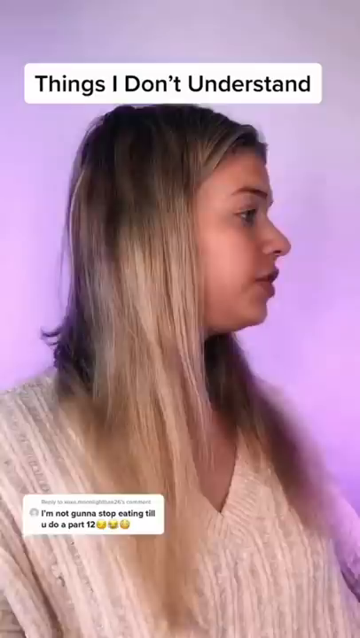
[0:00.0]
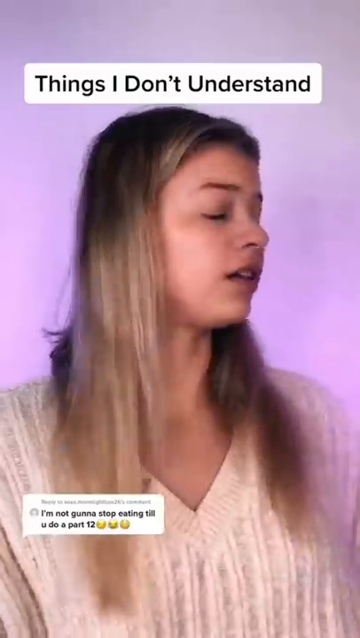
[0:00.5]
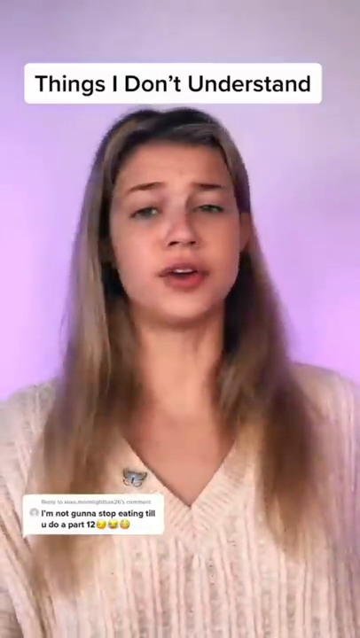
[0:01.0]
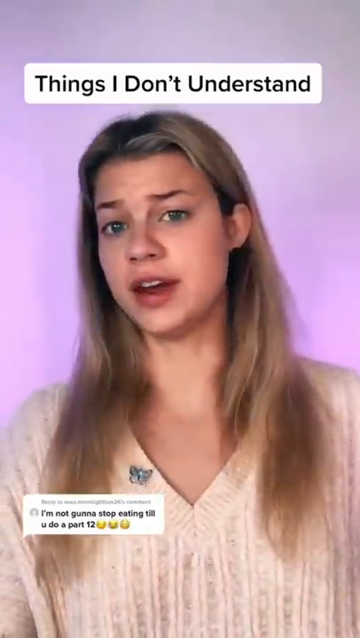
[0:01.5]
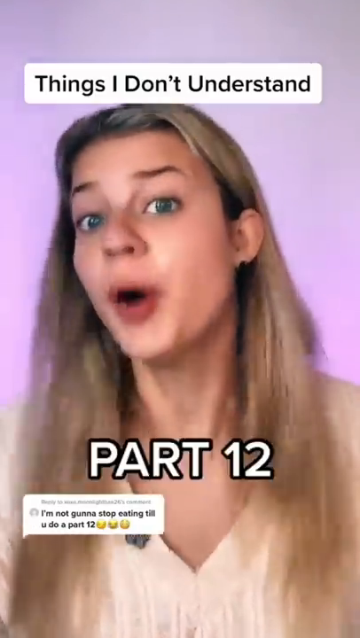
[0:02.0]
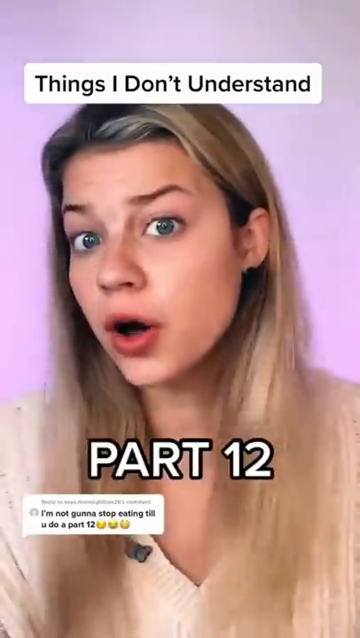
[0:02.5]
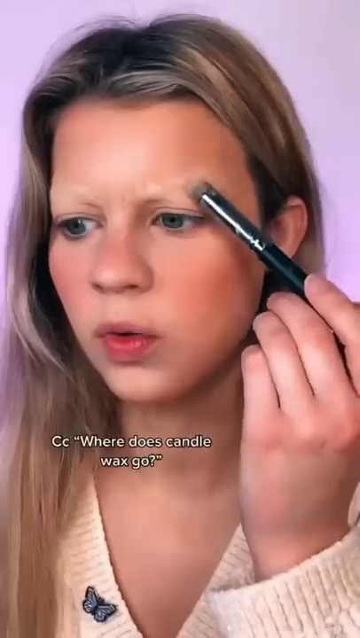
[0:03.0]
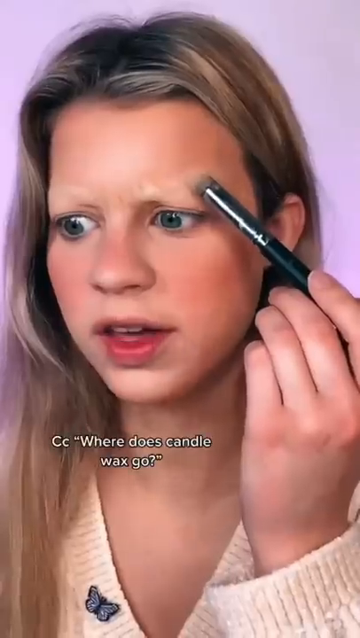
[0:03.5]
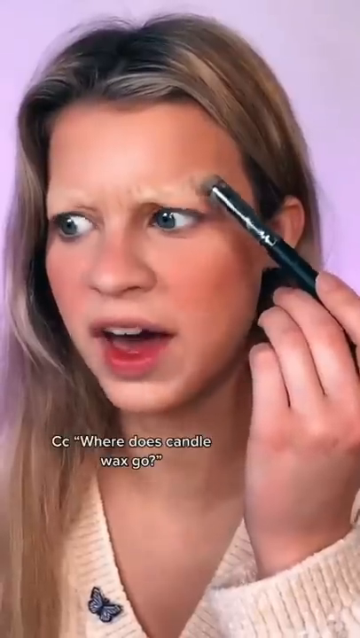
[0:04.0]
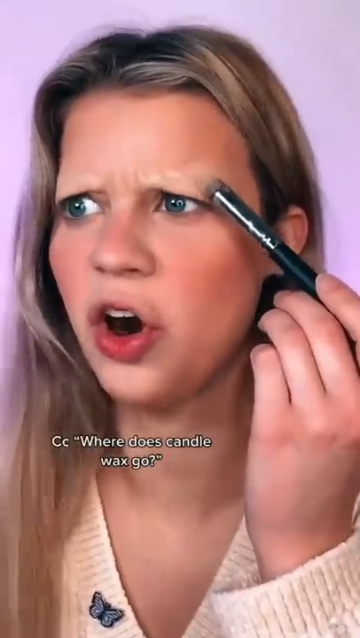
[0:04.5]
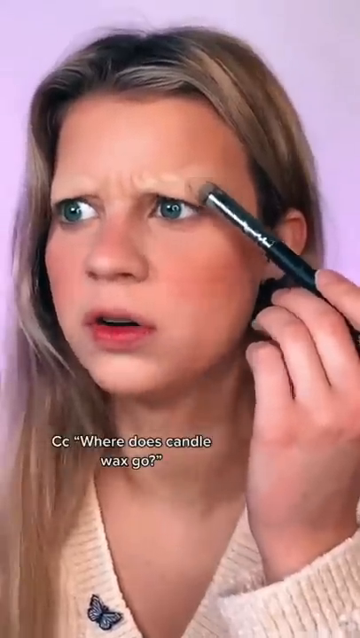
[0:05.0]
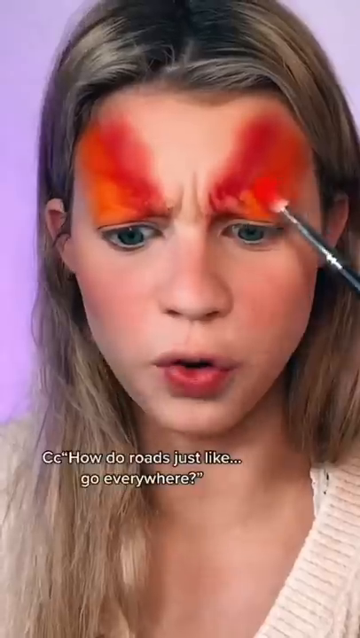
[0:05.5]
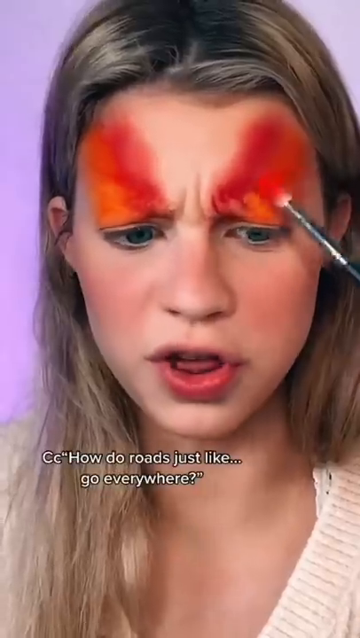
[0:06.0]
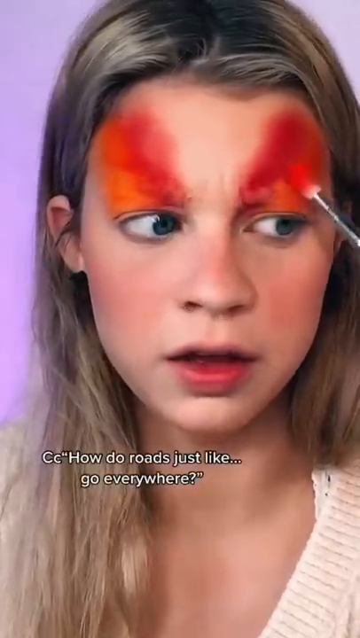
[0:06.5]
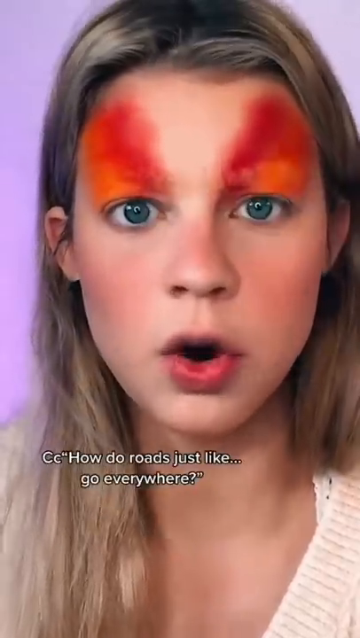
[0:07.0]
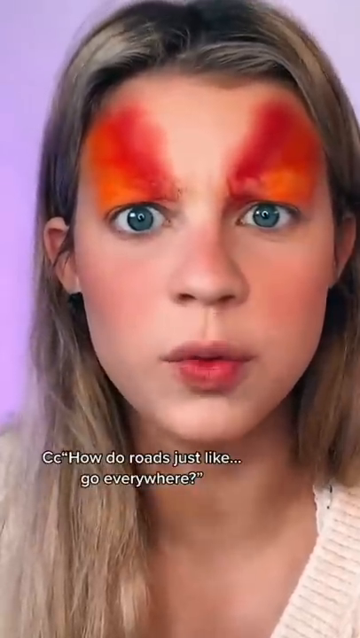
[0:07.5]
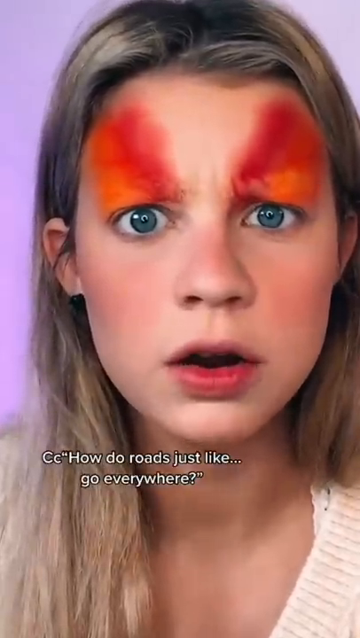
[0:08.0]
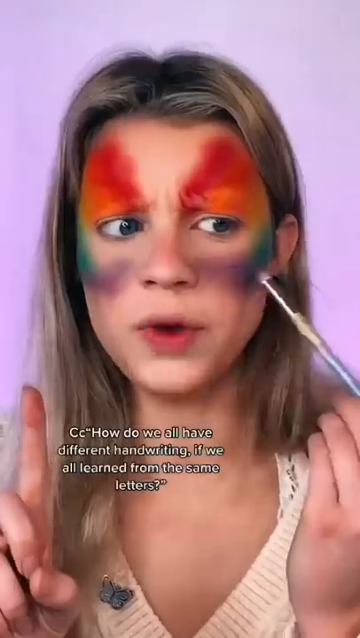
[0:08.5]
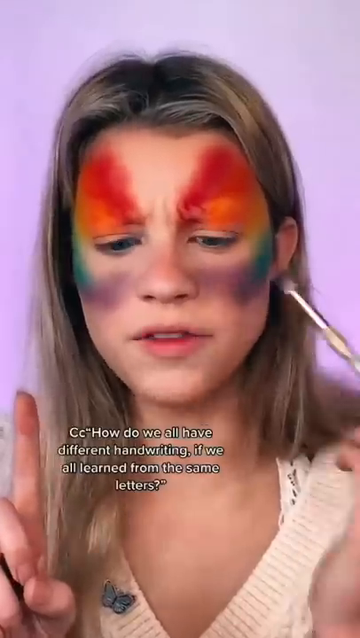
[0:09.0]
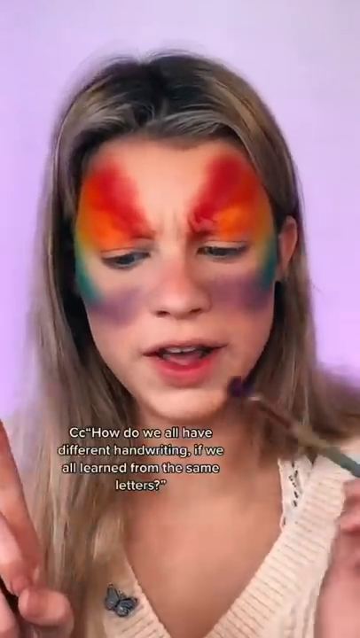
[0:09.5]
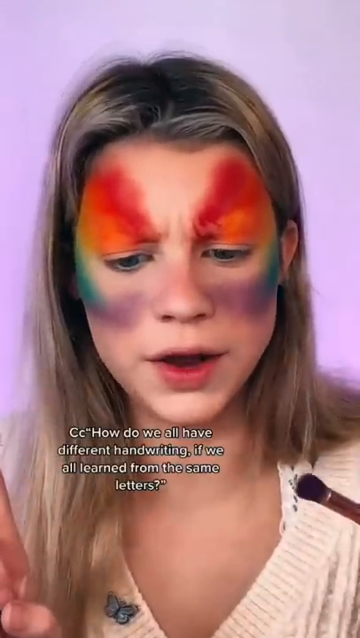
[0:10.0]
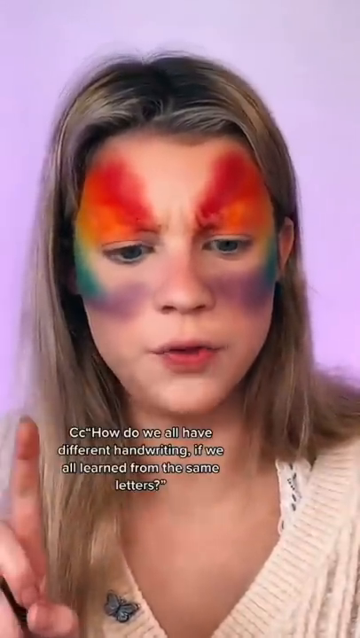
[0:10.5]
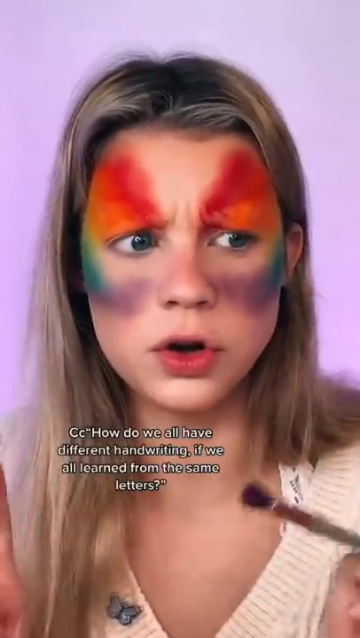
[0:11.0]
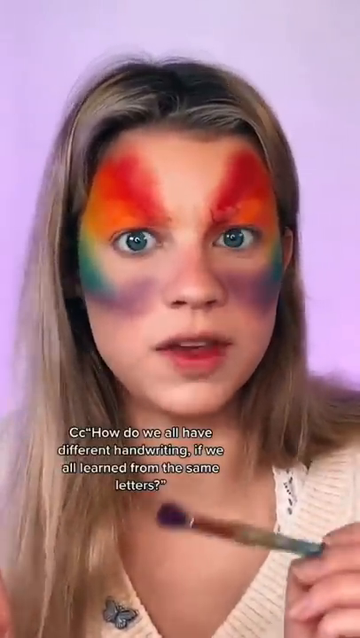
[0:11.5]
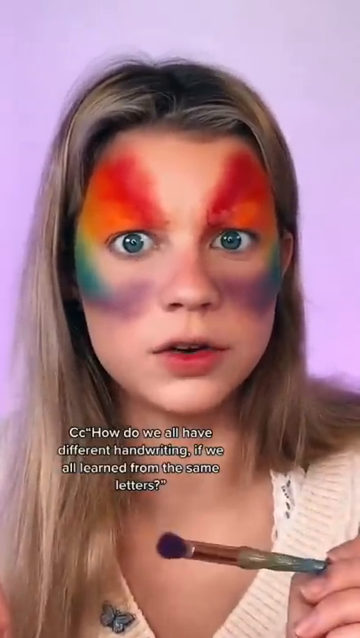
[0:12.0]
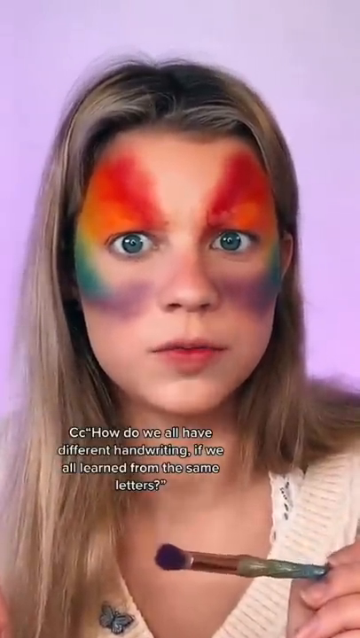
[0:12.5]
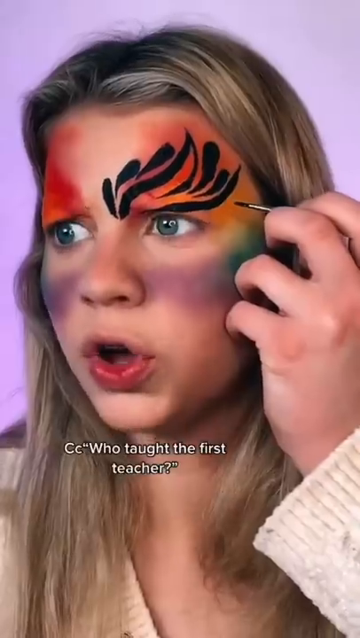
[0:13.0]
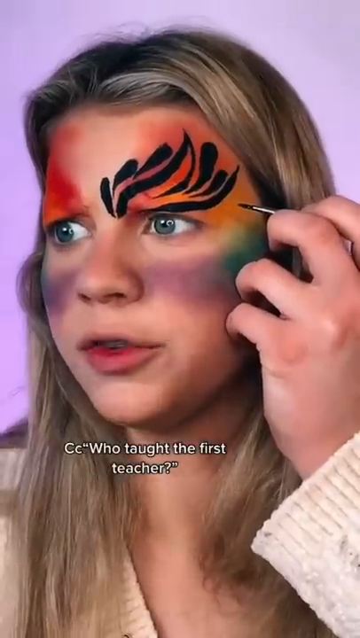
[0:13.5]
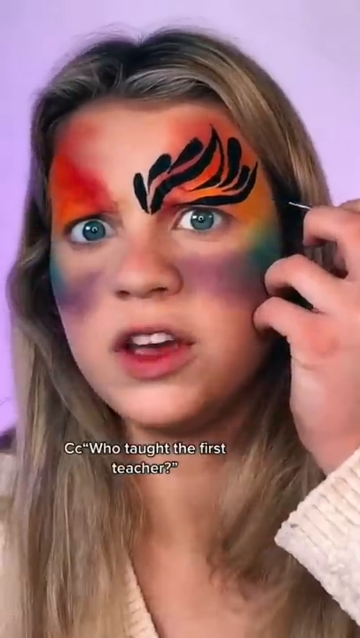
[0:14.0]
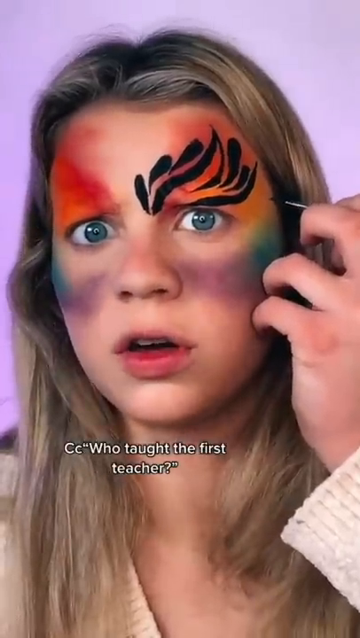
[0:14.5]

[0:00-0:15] This is part 12 of a multi-part video series filmed by a girl, made in response to someone who asked, "I'm not going to stop eating until you do part 12." Closed captions appear on screen, possibly song lyrics, while the girl paints her face. She is Caucasian and wears a white sweater with a butterfly pin on the collar, and she is painting a rainbow around her face. The area of her eyes closest to her eyebrows is painted red, and below that, moving out towards her ears, is orange. The video cuts, and green and blue are painted on her face under her cheeks as she adds purple. Lastly, she adds a black pattern in paint. The red and orange are a kind of powdery coloring applied with a makeup brush, whereas the black, which looks like leaves, is painted on with what looks like a paintbrush.